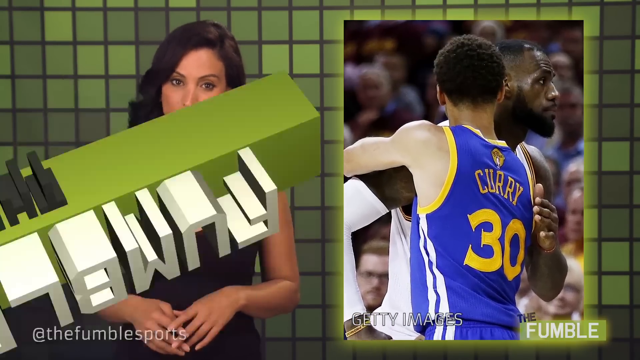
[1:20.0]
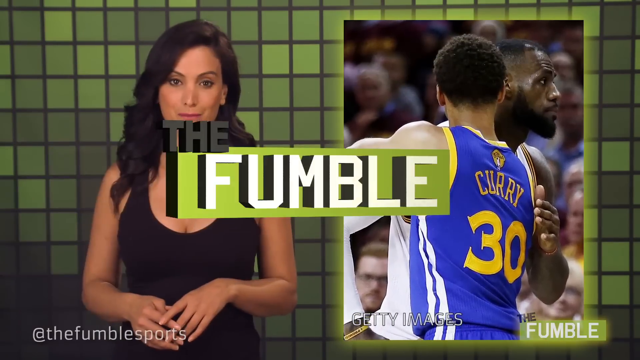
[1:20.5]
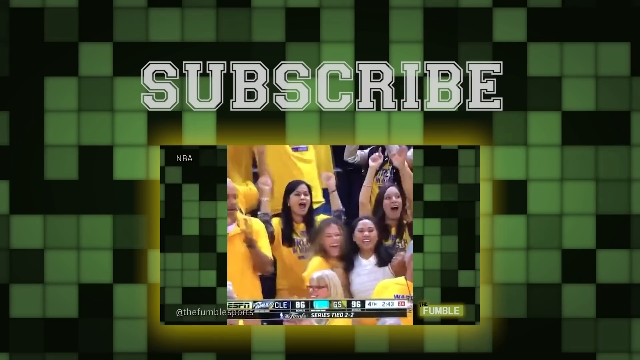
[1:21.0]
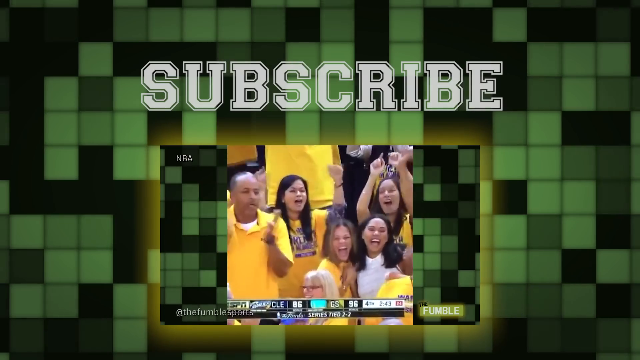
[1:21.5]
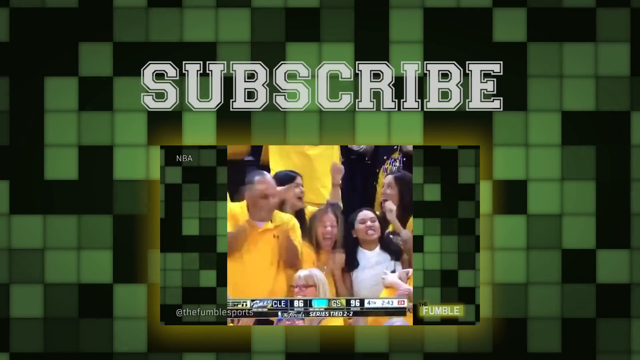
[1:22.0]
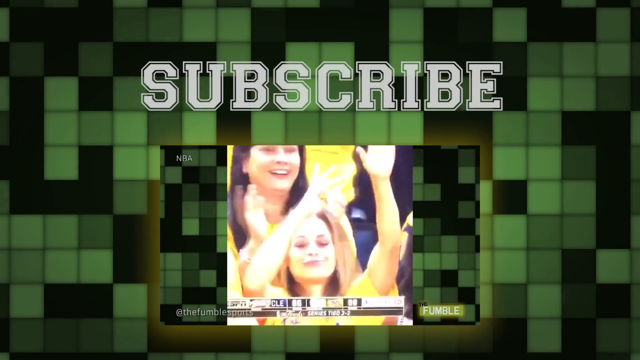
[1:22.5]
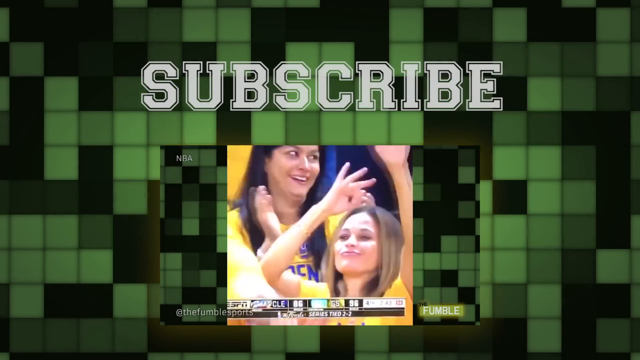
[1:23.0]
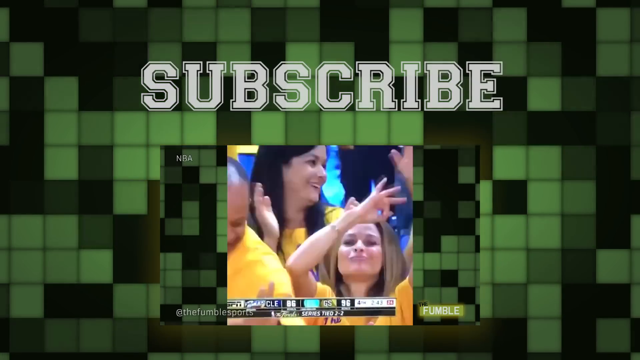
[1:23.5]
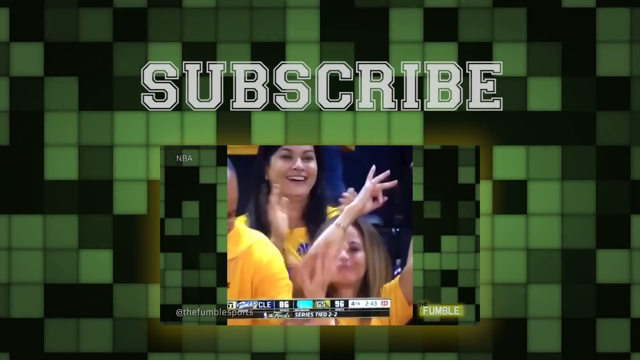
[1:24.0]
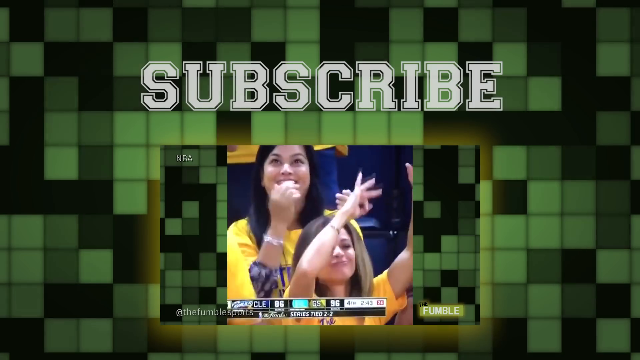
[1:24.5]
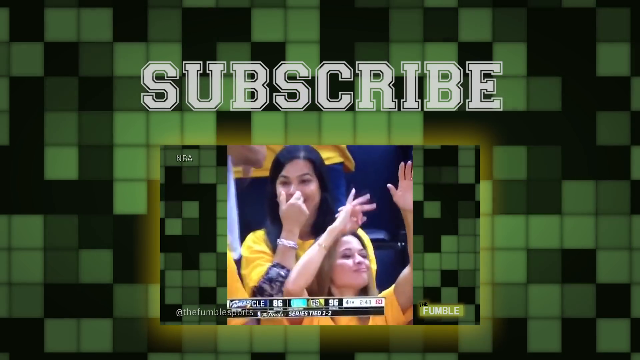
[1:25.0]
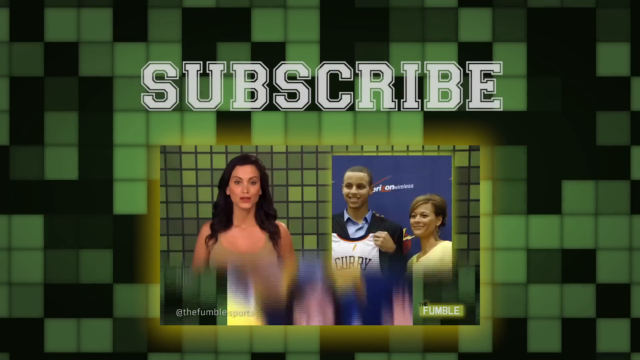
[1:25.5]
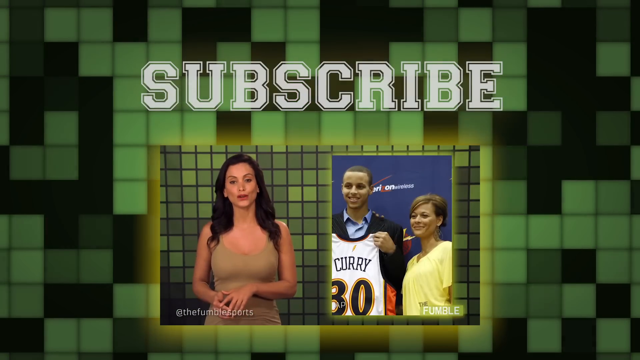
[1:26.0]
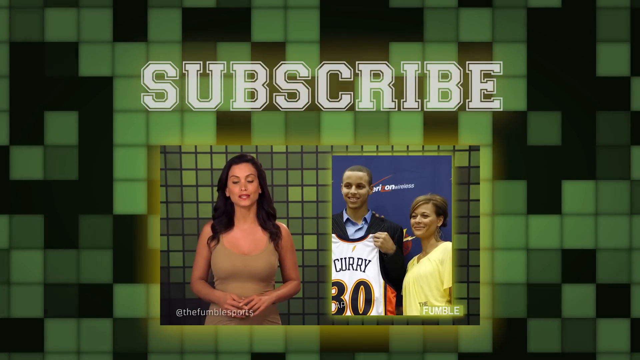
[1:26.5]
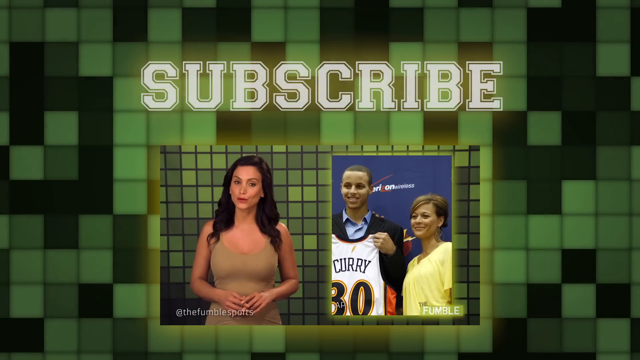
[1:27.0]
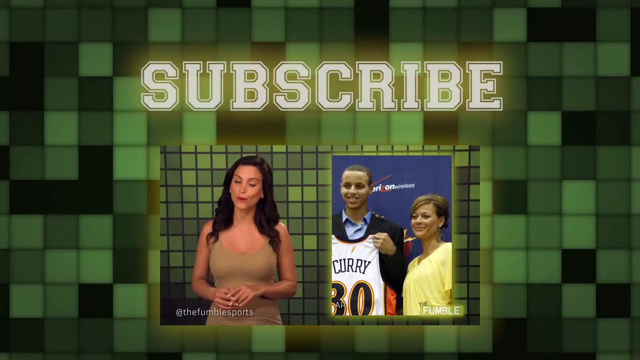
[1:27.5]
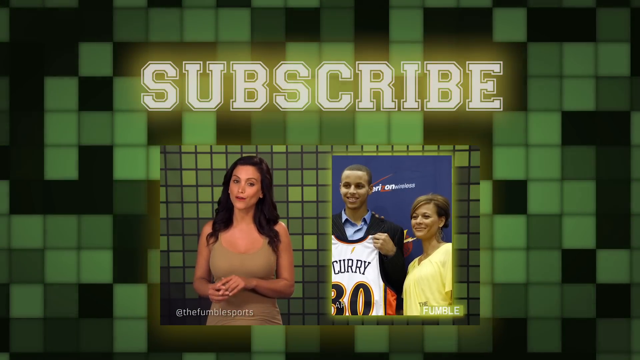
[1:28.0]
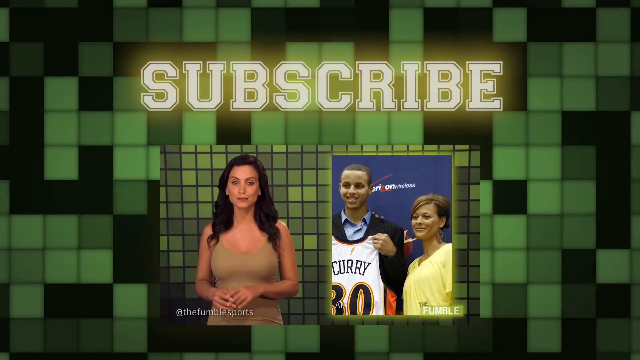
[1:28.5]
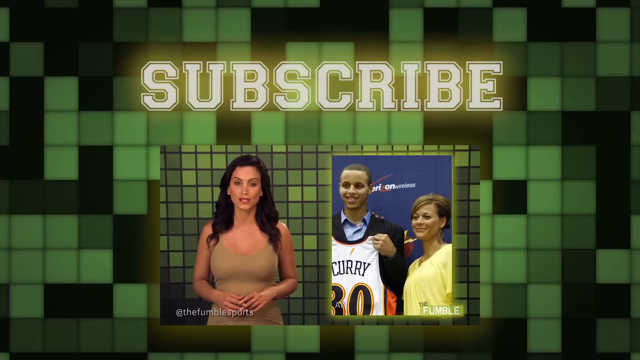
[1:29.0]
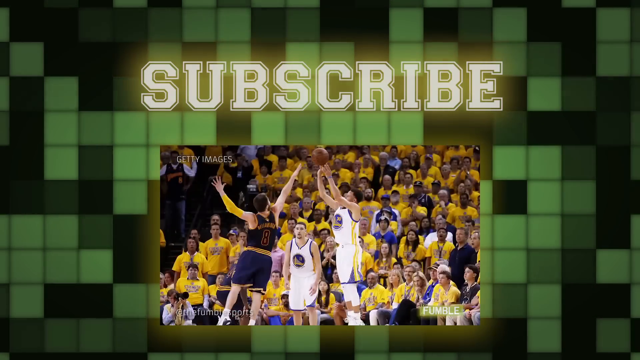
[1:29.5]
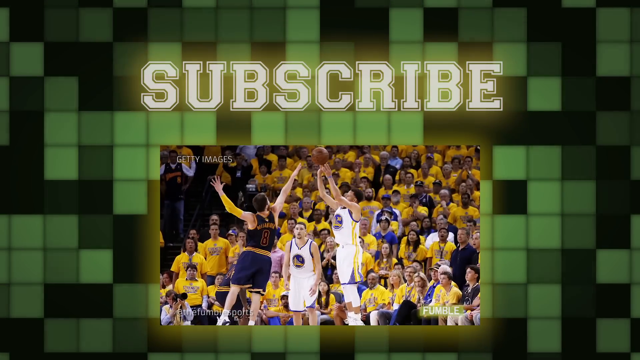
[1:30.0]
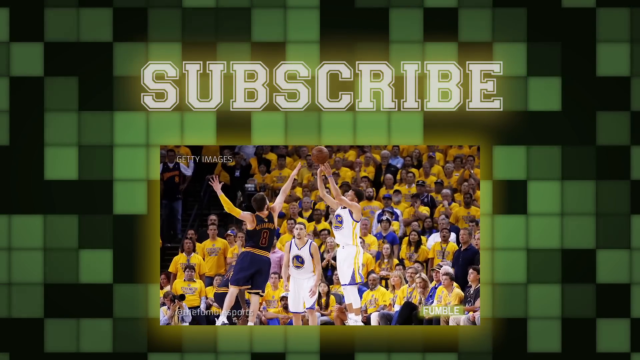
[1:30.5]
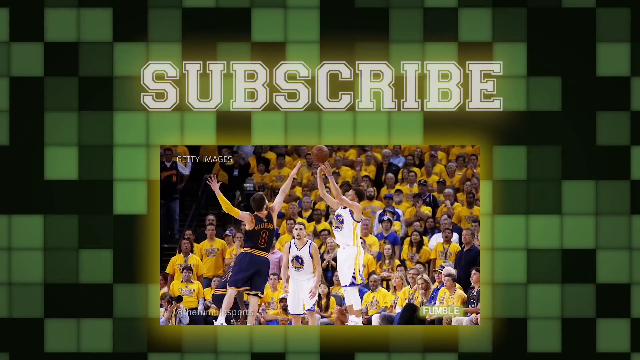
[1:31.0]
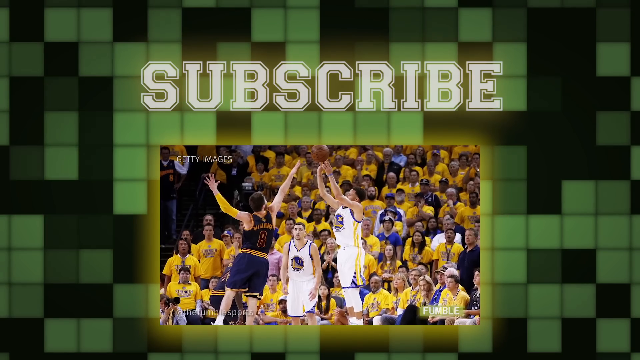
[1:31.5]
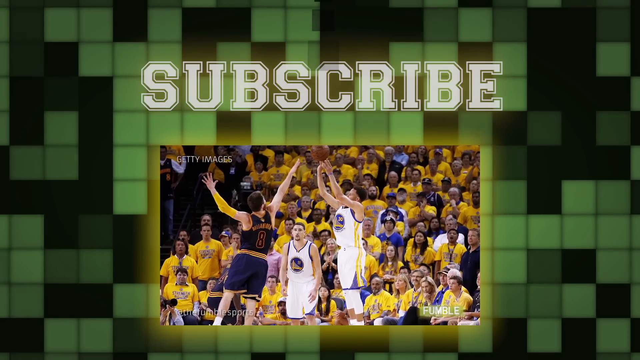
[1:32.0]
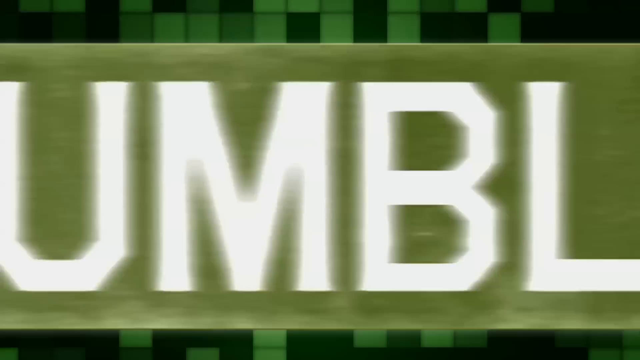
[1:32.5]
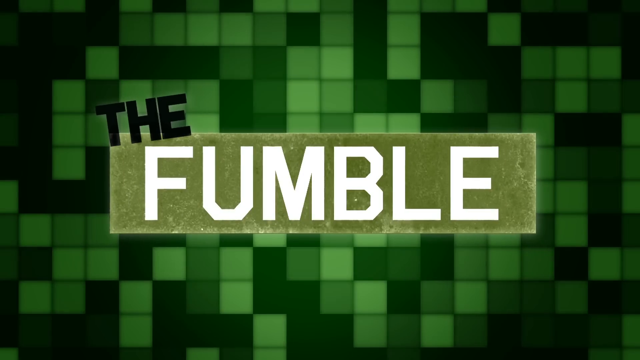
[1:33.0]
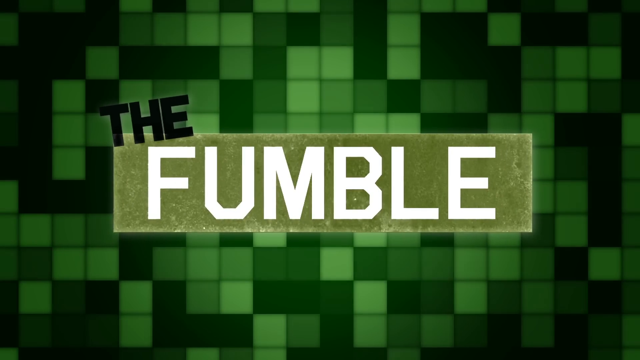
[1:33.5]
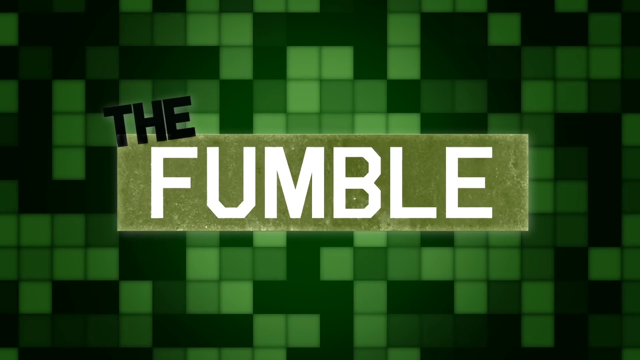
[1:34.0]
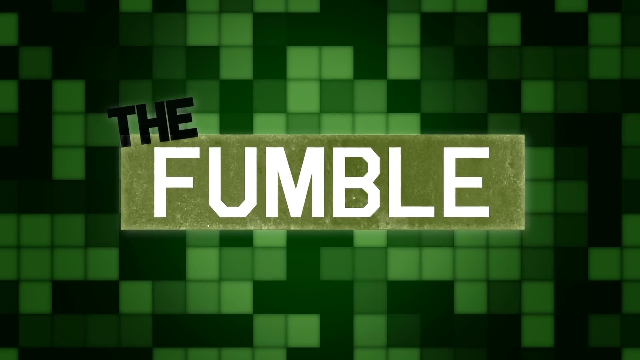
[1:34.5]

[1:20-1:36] A Fumble transition overlays the woman on the green chequered background as she talks to the camera, with the image of Steph Curry and LeBron James embracing mid-game on screen. The video transitions to an end screen with the same green chequered background. White capitalised text at the top reads "subscribe", and beneath it a smaller video with an NBA tag plays, showing fans wearing yellow cheering, celebrating, hugging, dancing and smiling, all looking very happy. Next comes what looks like the host in a different outfit, a brown dress, talking to the camera in front of the same green chequered background, with a picture of a young Steph Curry holding a white uniform in his hand and a woman wearing yellow standing to his left on a dark blue background; the image is zoomed in on. Then a player in a white uniform, with a teammate standing behind him, makes a shot while a player in a navy blue and yellow uniform tries to block him, and a crowd all wearing yellow watches with great interest. The Fumble outro screen seen in the intro then appears.